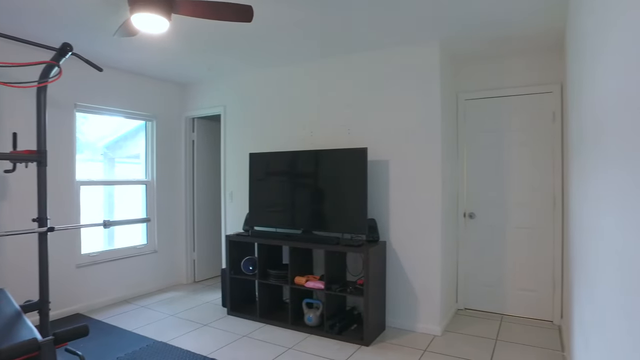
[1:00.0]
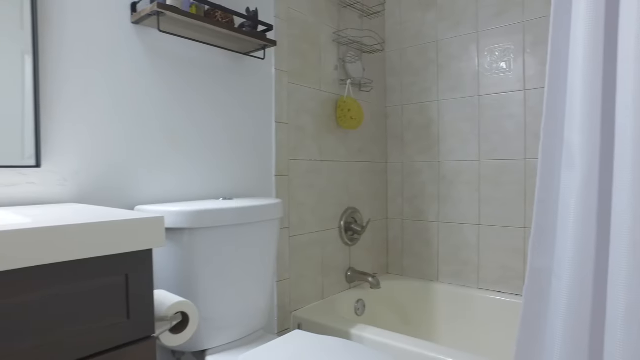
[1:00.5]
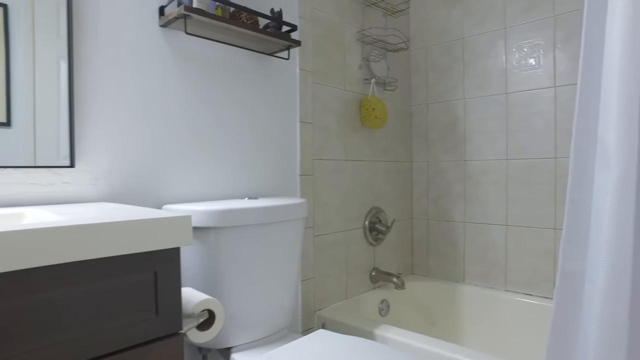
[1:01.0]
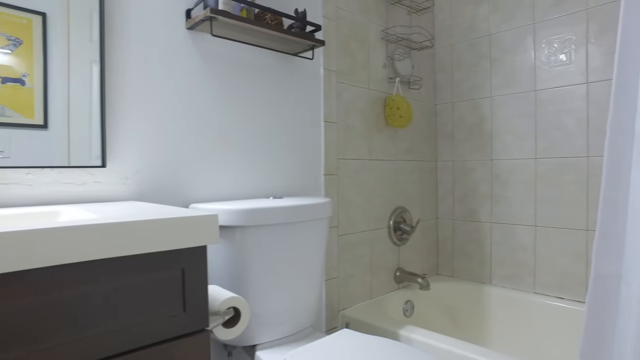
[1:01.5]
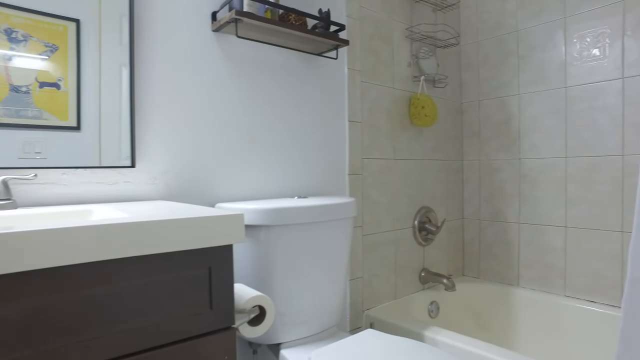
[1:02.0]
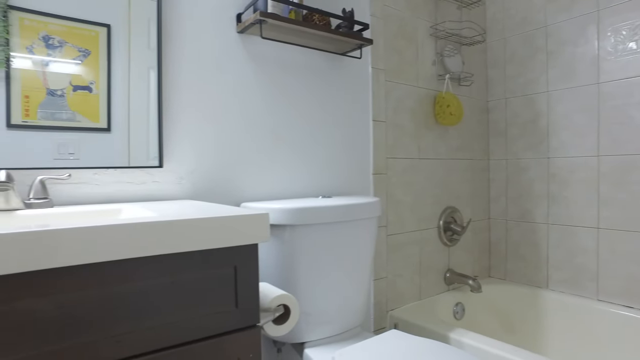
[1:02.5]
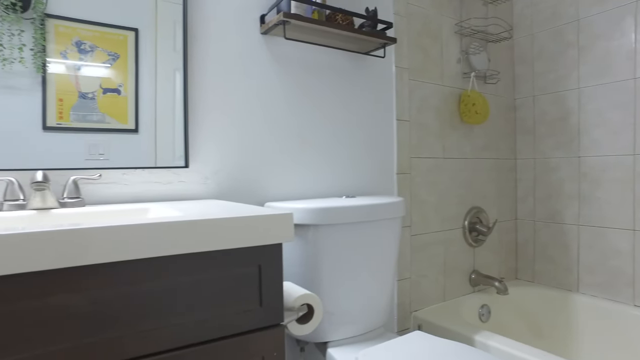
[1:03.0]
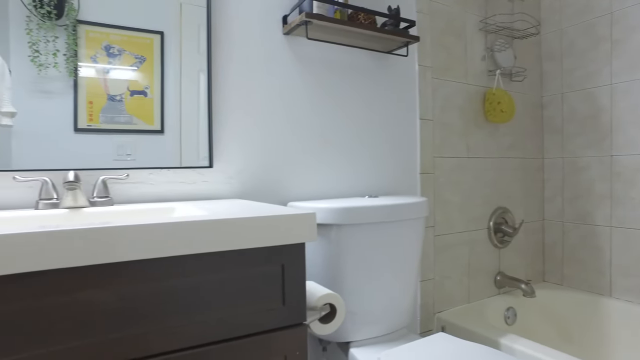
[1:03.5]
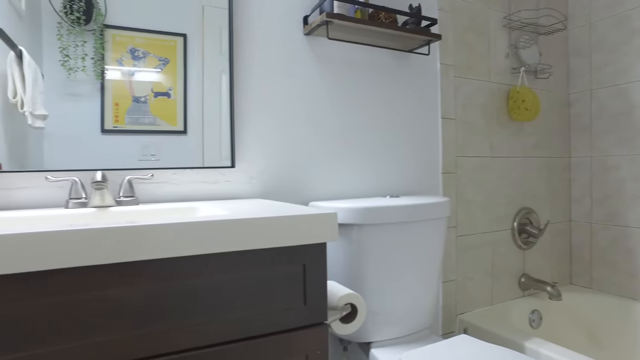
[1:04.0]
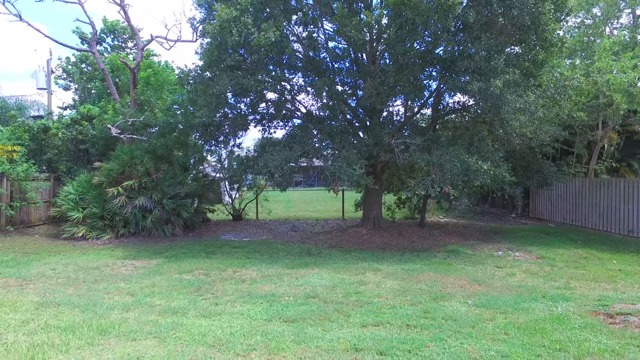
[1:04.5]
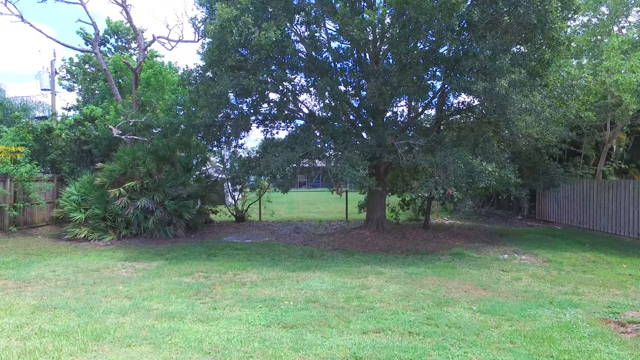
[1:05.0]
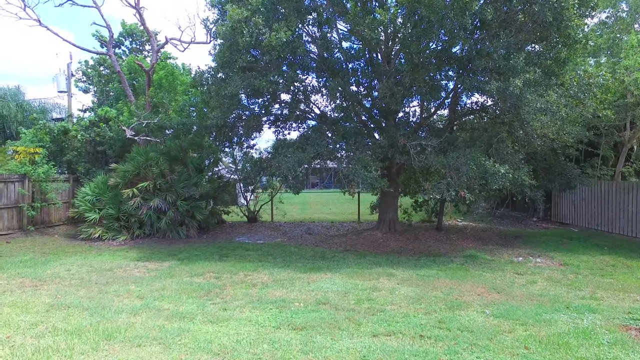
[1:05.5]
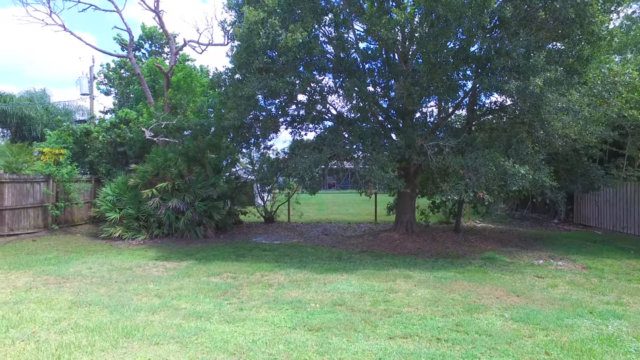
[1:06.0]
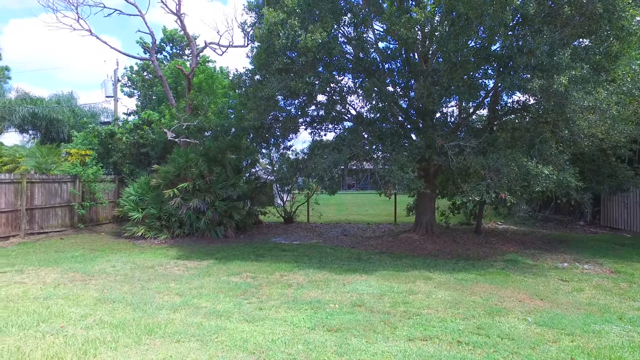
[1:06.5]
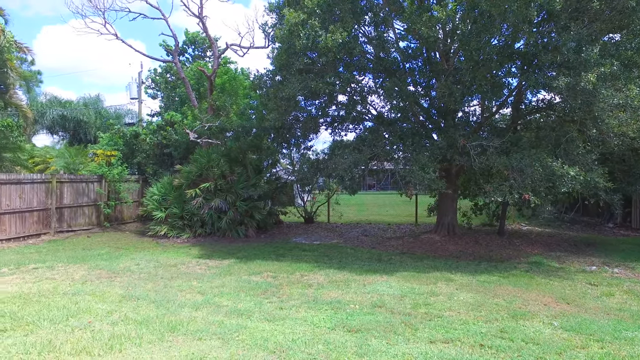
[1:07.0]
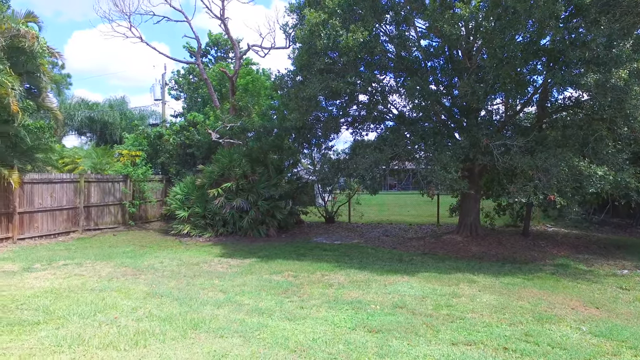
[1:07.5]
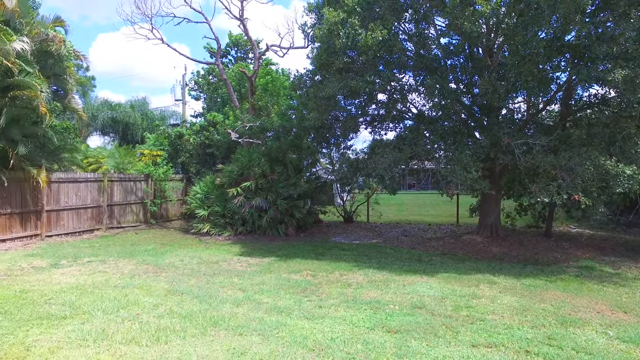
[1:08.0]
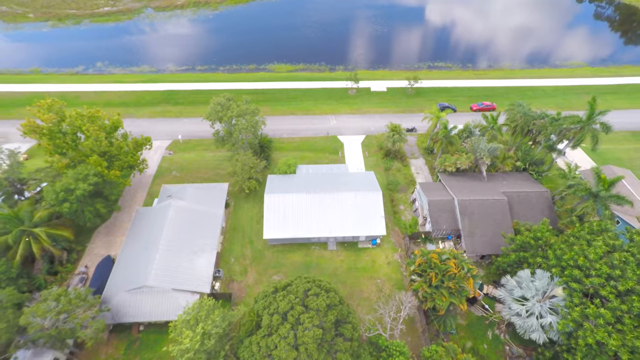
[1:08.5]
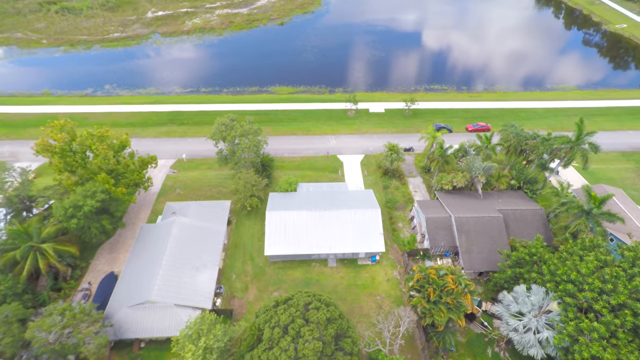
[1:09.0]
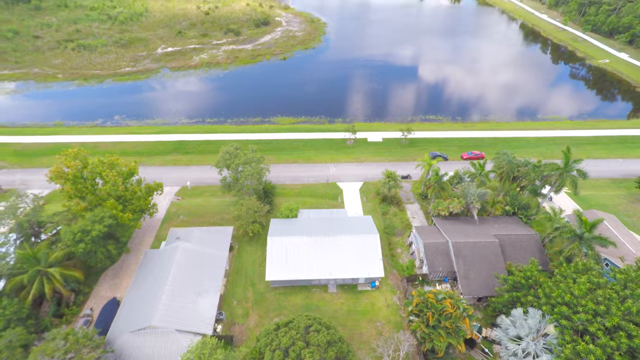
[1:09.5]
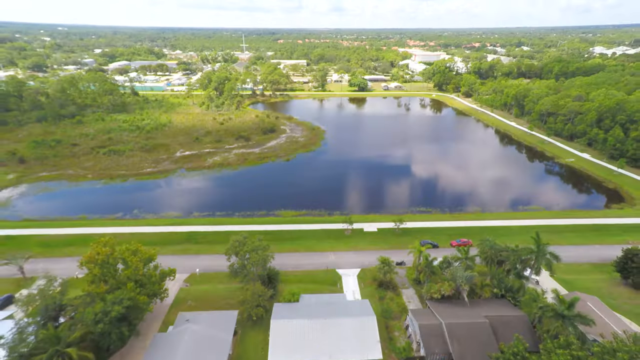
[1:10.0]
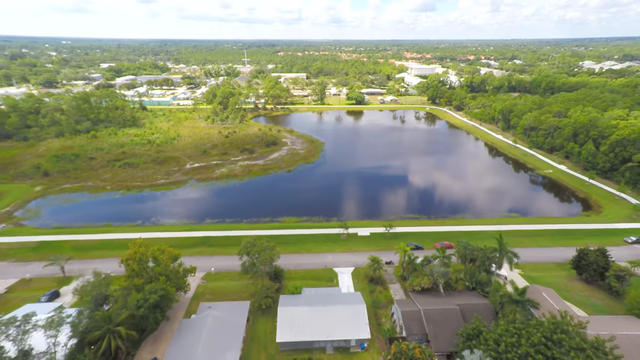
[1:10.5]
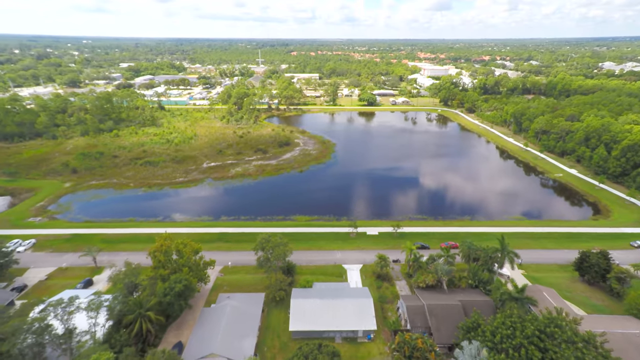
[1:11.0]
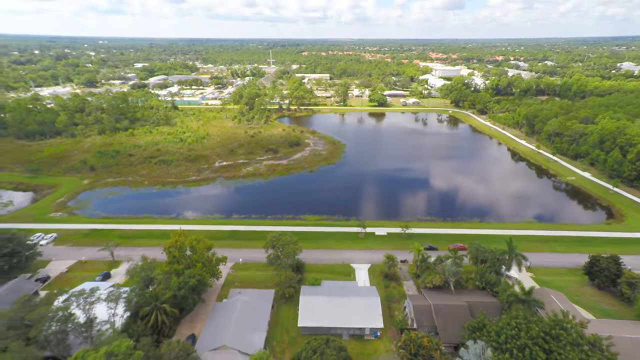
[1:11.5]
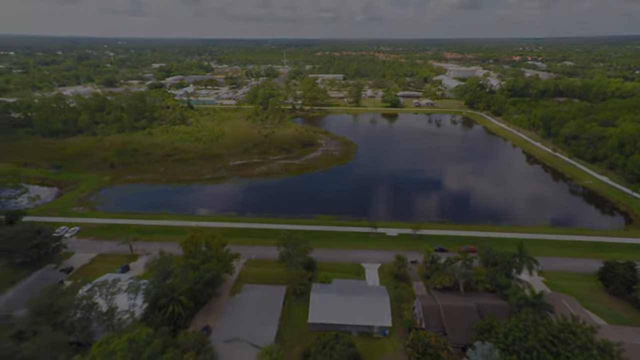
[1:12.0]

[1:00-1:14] The outside of the property is shown. There is a mature shade tree in the backyard and a privacy fence all around it. From above, a large lake is visible right across from the home. The neighborhood is quiet and wooded, with no tall buildings as far as the eye can see to the horizon, just woods and greenery. The interior is also shown, with large windows, a modern kitchen, a modern living area and a space for a home office.